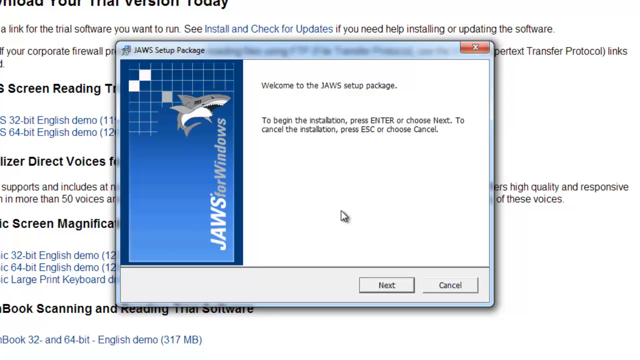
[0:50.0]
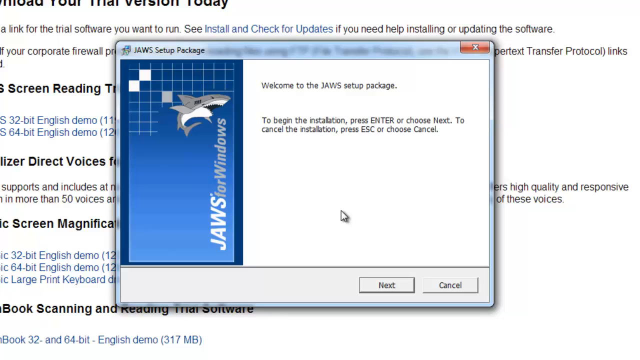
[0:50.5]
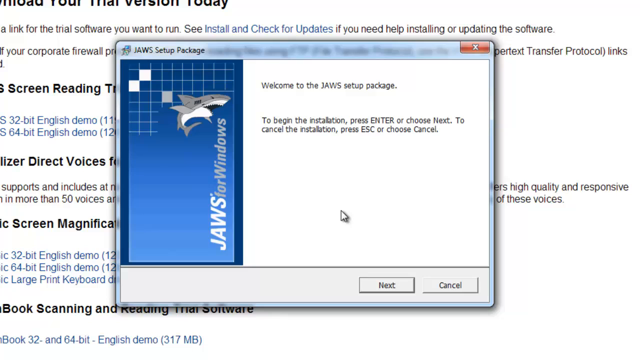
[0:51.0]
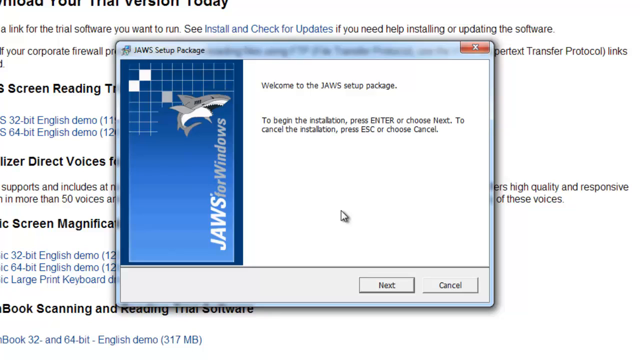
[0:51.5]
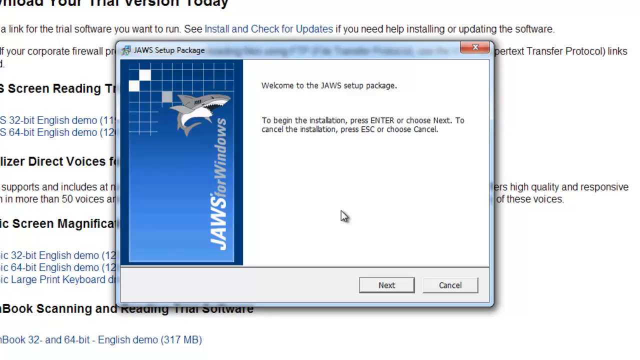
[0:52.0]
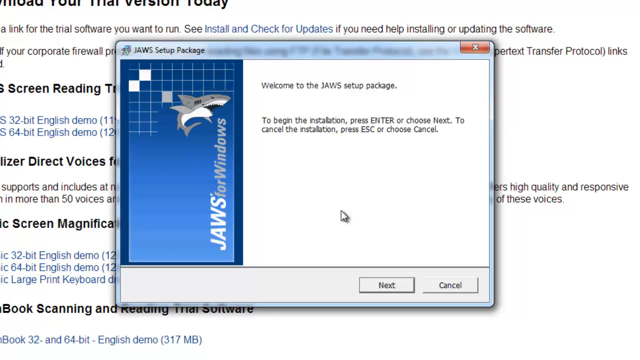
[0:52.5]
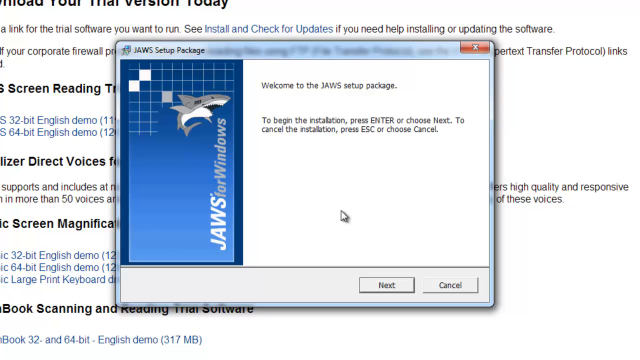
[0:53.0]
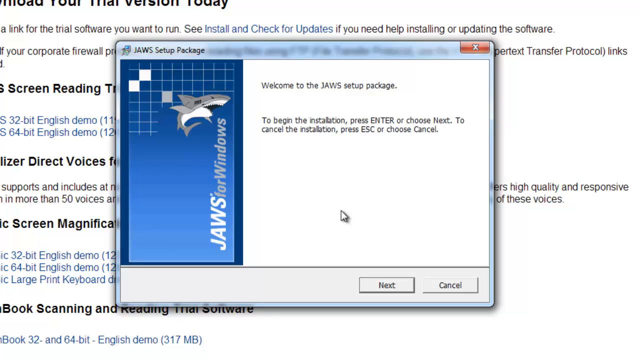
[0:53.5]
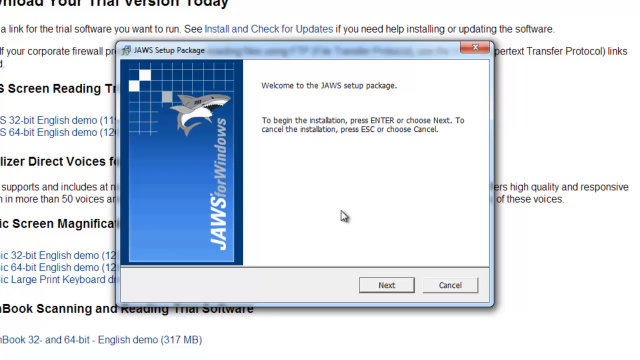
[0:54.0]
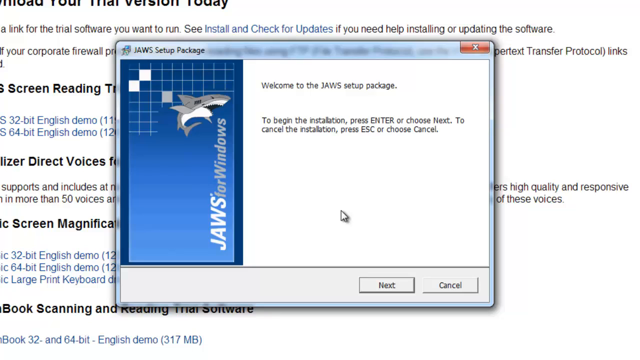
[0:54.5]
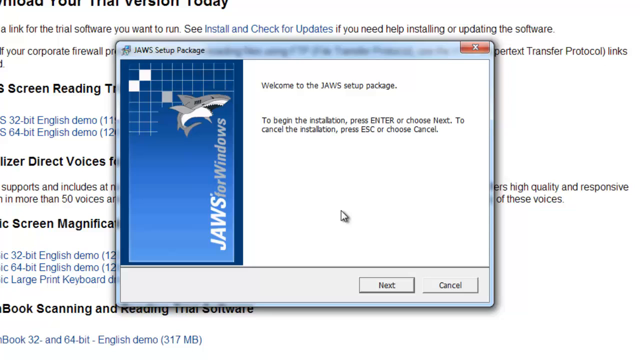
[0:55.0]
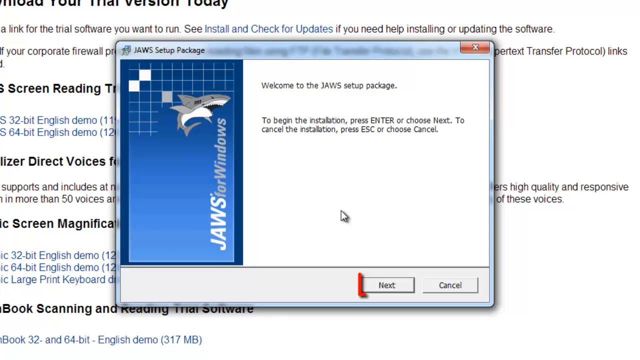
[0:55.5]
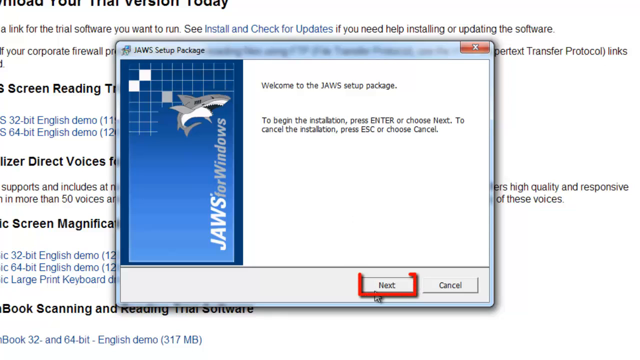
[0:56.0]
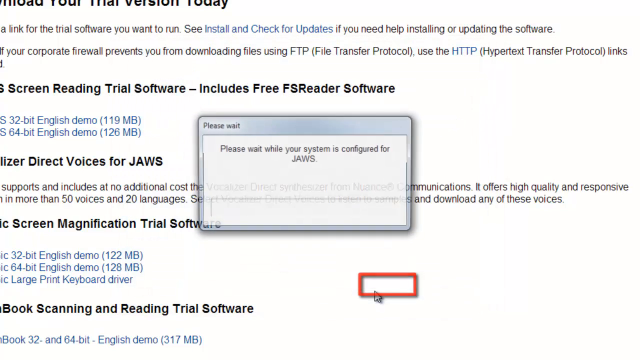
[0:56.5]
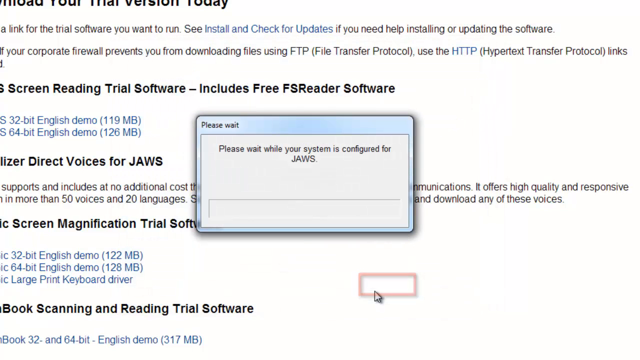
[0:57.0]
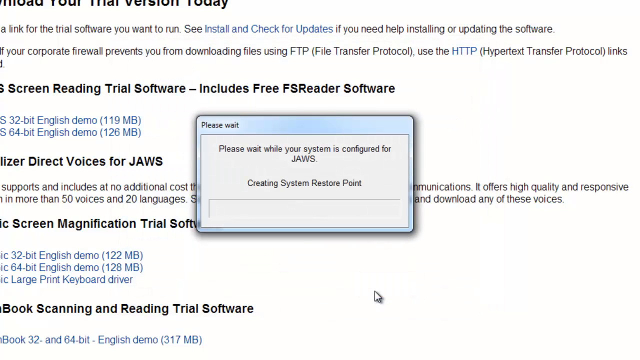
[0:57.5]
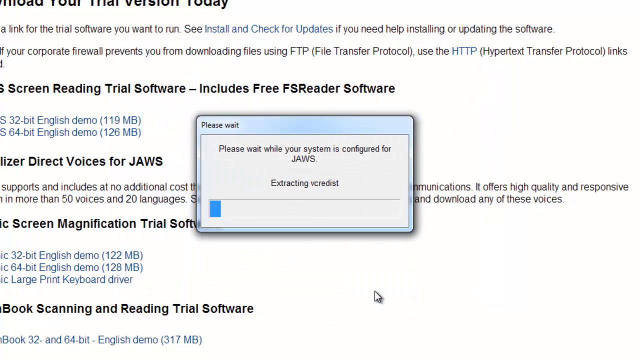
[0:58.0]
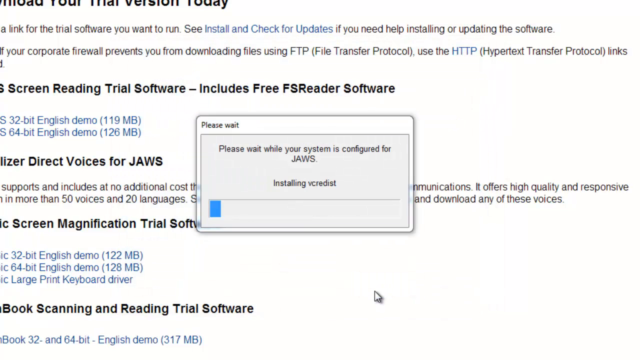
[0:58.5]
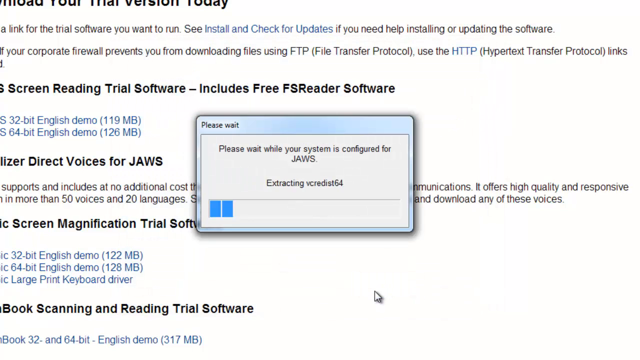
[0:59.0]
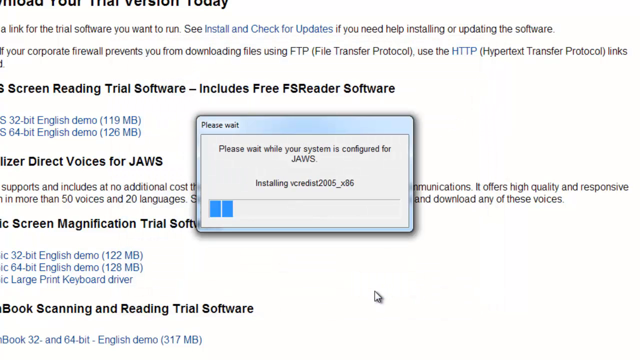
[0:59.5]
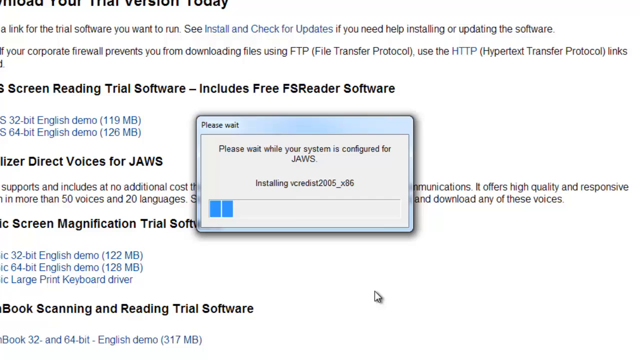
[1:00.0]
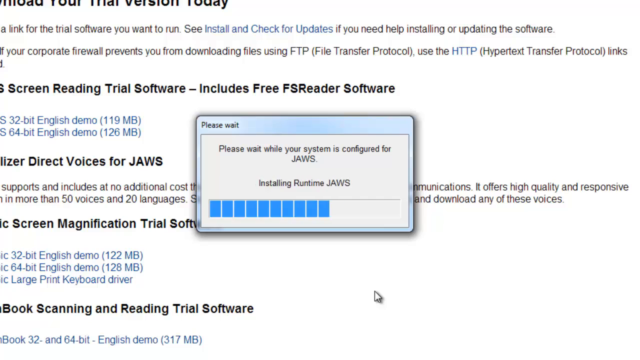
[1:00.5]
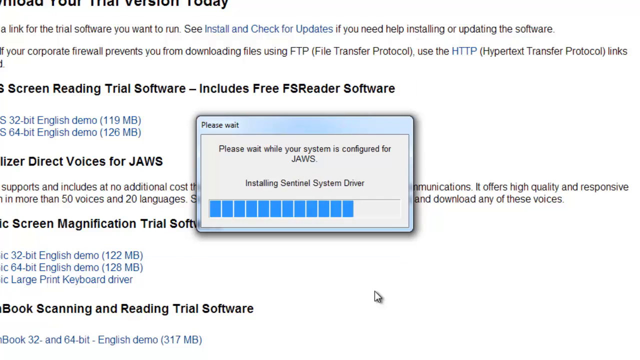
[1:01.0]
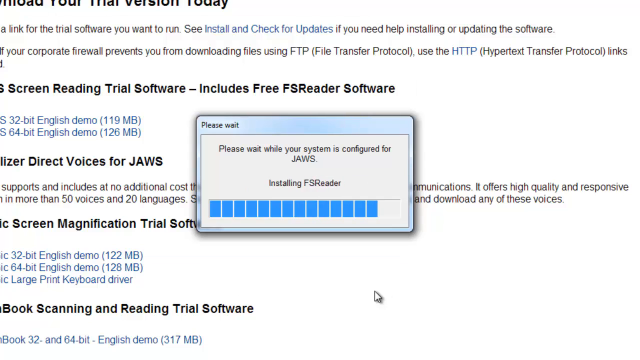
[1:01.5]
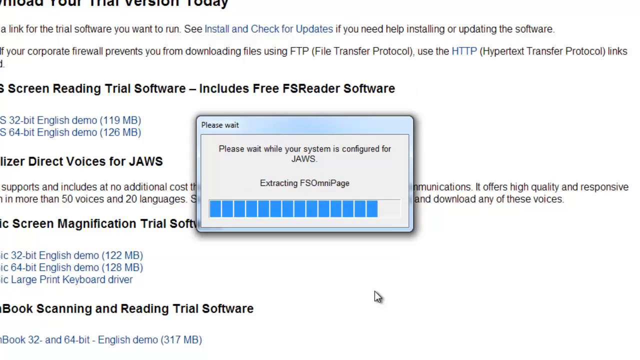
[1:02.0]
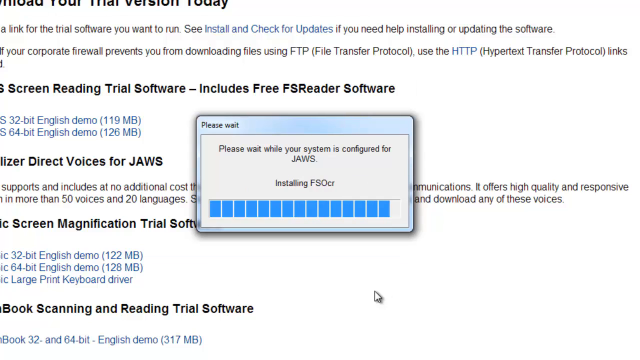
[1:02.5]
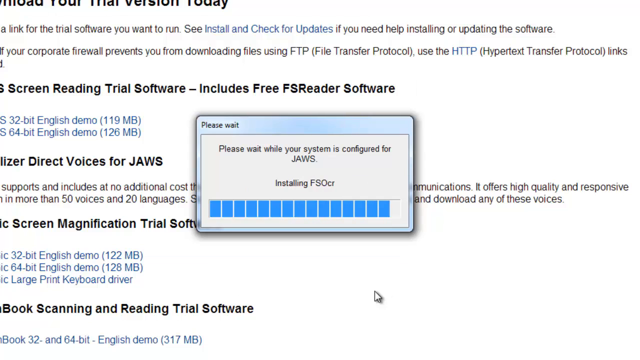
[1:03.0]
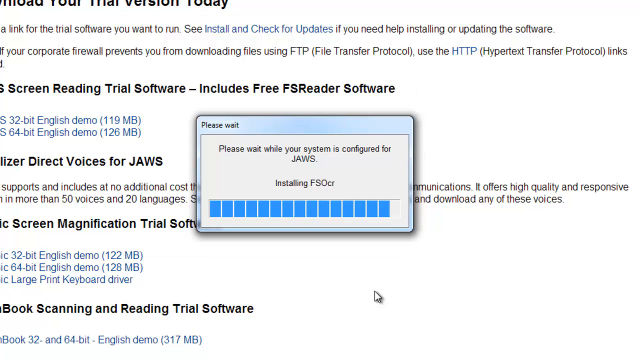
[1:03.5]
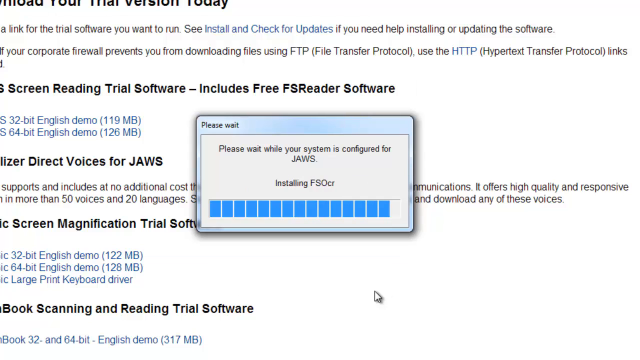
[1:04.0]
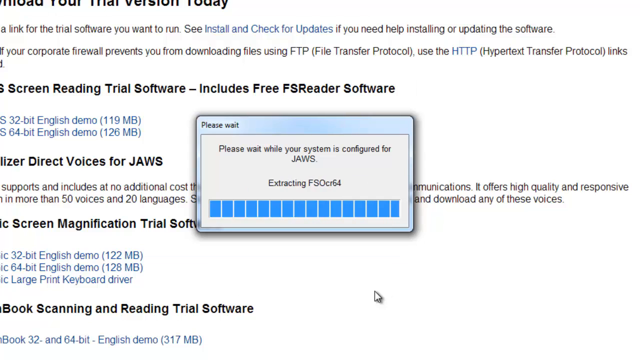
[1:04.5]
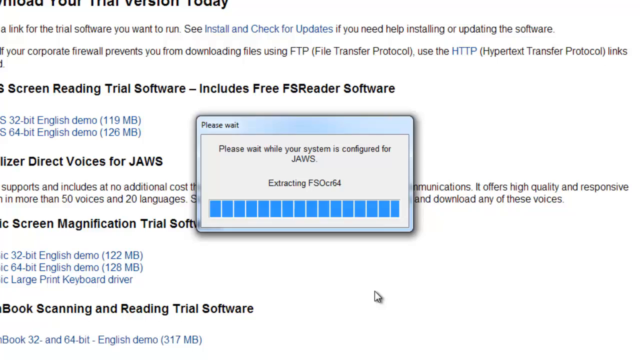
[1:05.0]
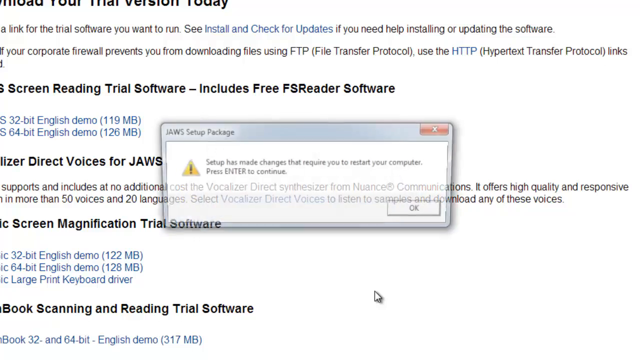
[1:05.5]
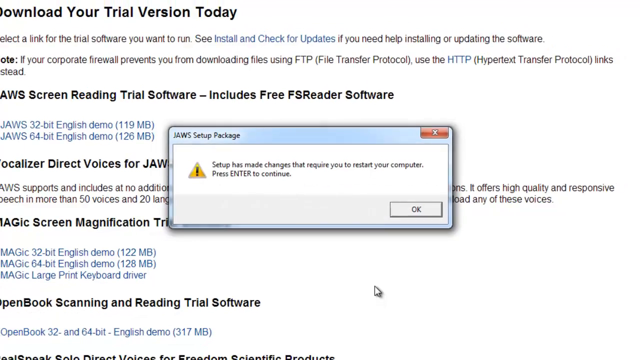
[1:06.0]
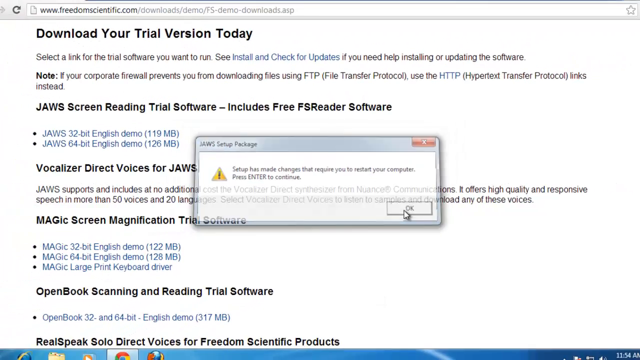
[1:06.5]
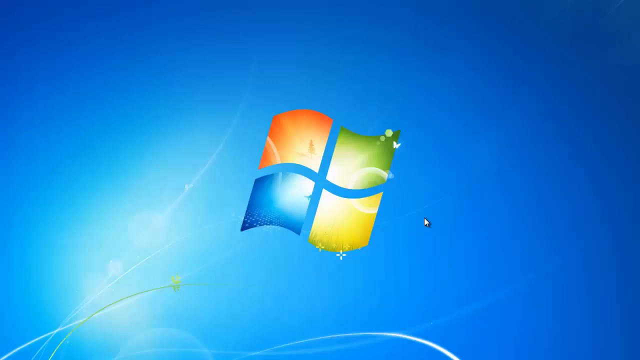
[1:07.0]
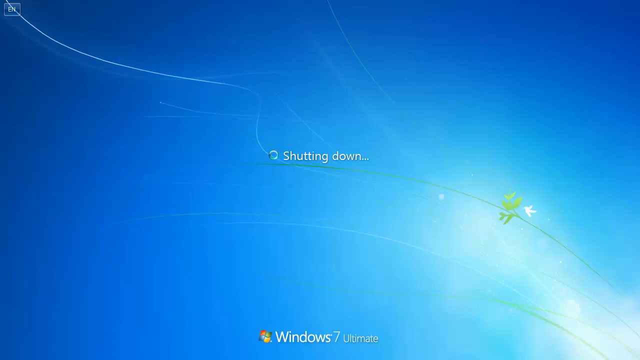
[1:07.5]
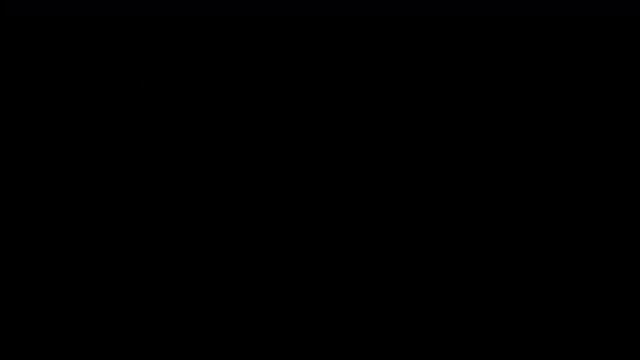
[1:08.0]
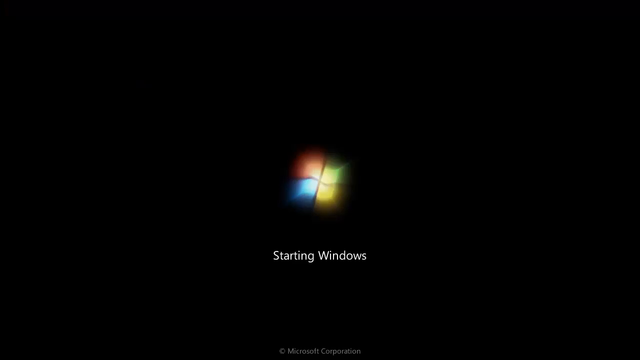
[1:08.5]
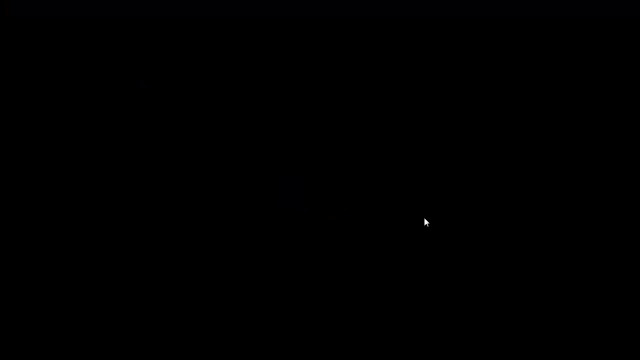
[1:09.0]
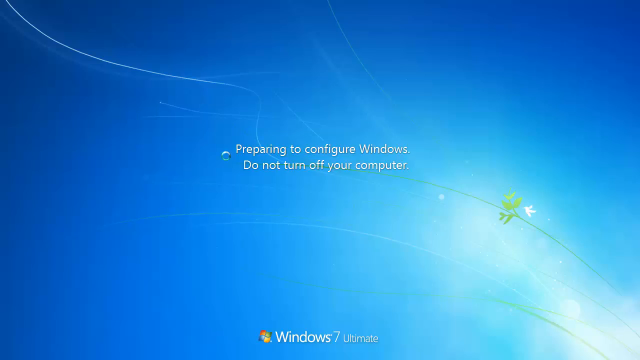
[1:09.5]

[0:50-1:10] With the web page, the English demo files and the notes in the background, a blue and white pop-up appears on screen that says "JAWS setup package". On its left side is a blue logo with a half white grid pattern on top and a shark icon or symbol inside the grid in the bottom right corner of the grid area, and "JAWS for Windows" runs vertically on the right side. The installation program offers options to go to next to begin the installation or to cancel it. The cursor is sitting in the center of the install window before a red outline appears around the next option and it is clicked. Another pop-up saying "please wait" appears, its small rectangular box reading "please wait while your system is configured for JAWS".